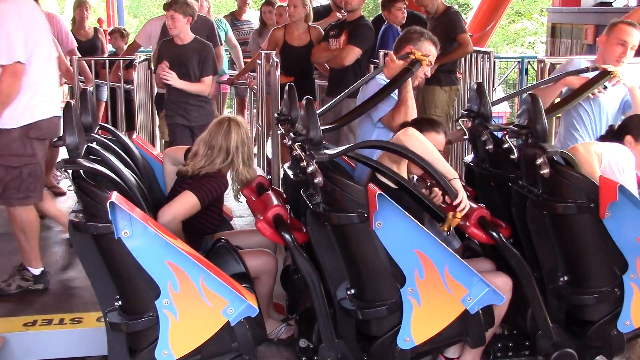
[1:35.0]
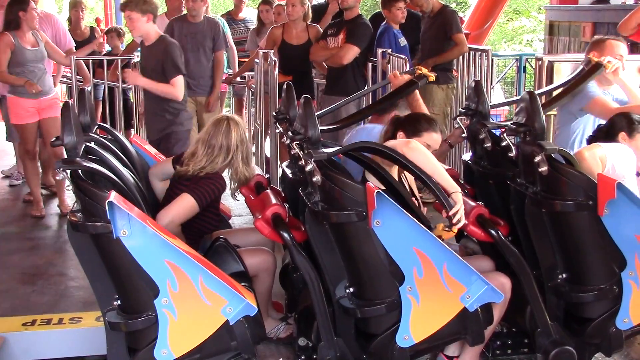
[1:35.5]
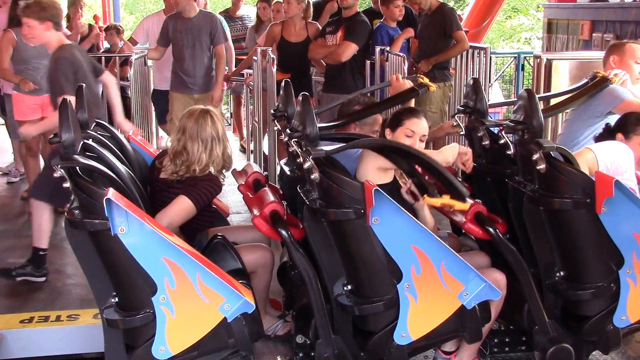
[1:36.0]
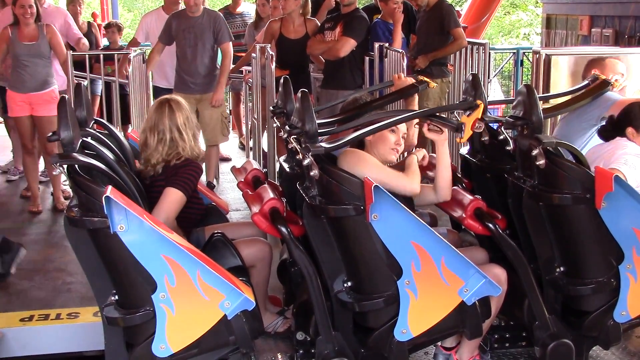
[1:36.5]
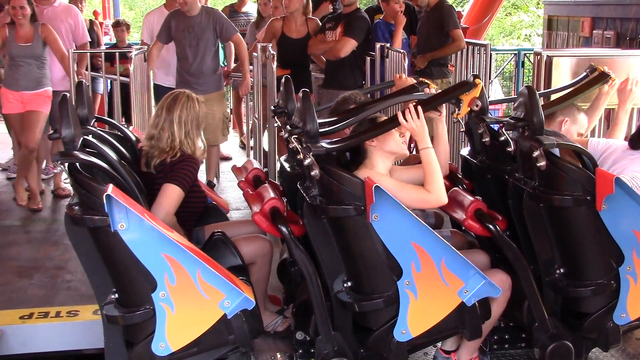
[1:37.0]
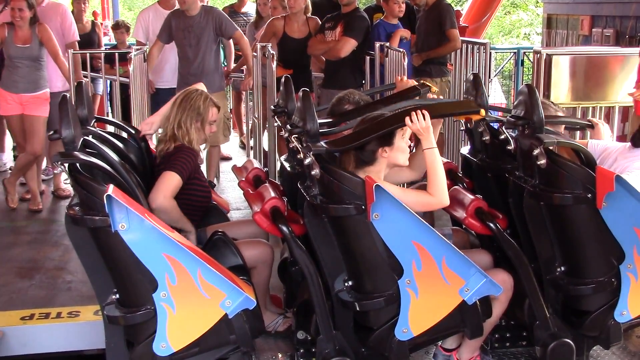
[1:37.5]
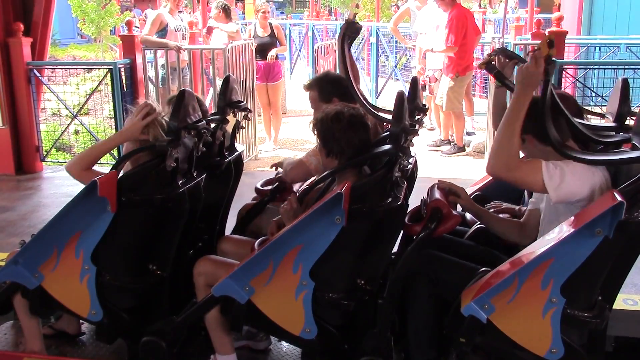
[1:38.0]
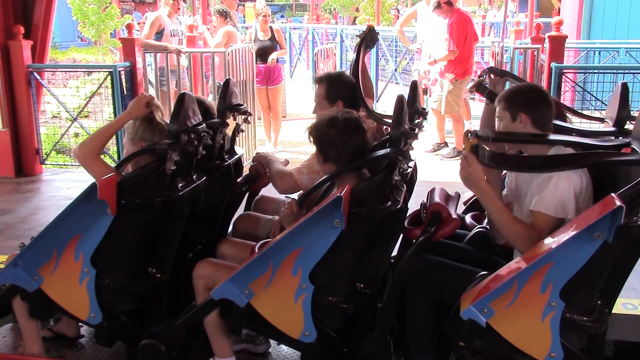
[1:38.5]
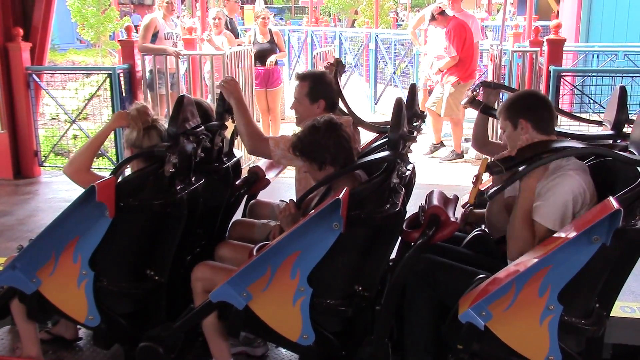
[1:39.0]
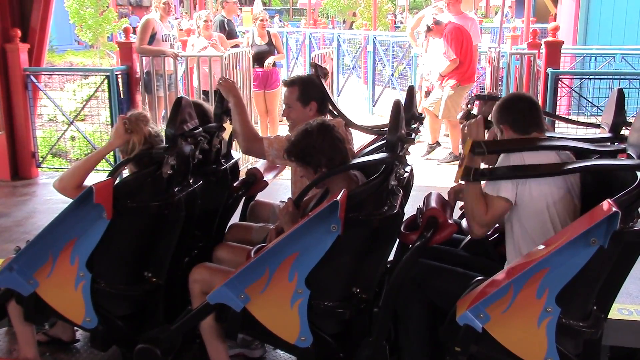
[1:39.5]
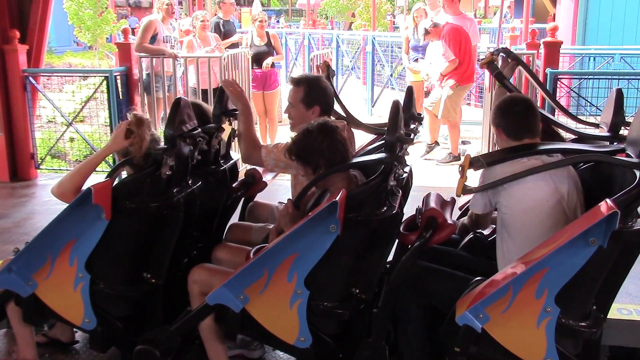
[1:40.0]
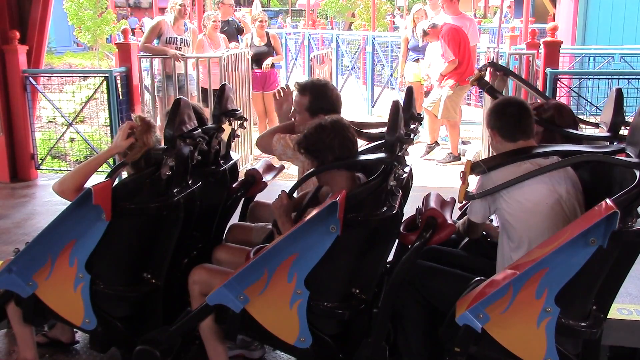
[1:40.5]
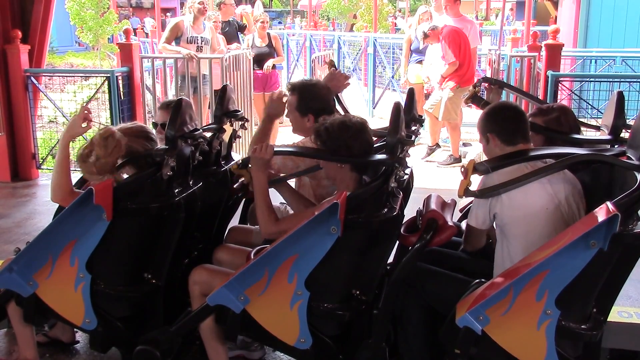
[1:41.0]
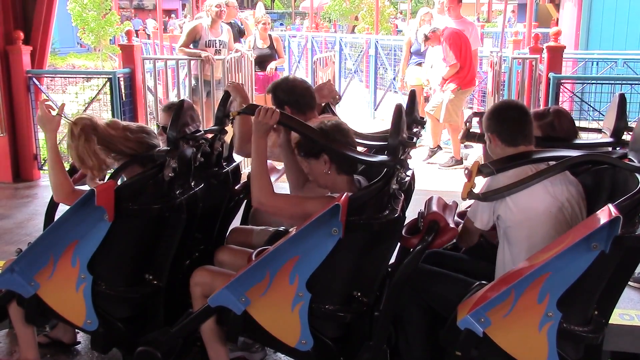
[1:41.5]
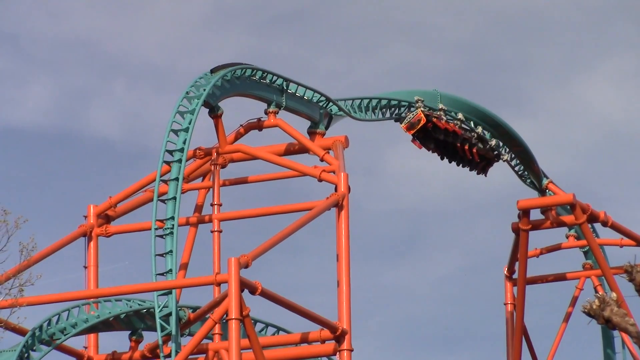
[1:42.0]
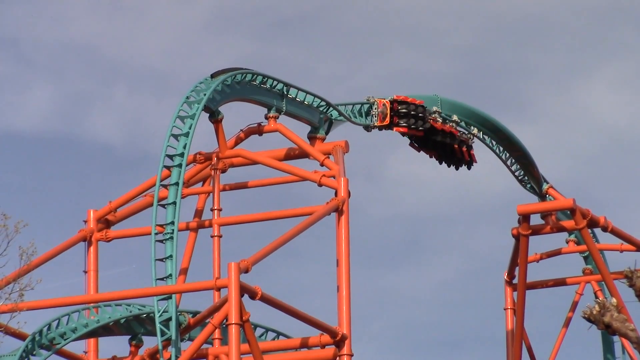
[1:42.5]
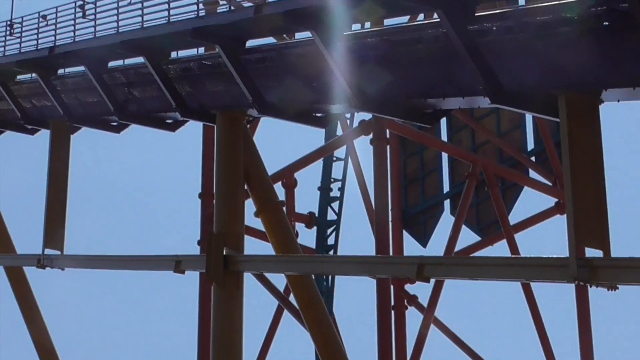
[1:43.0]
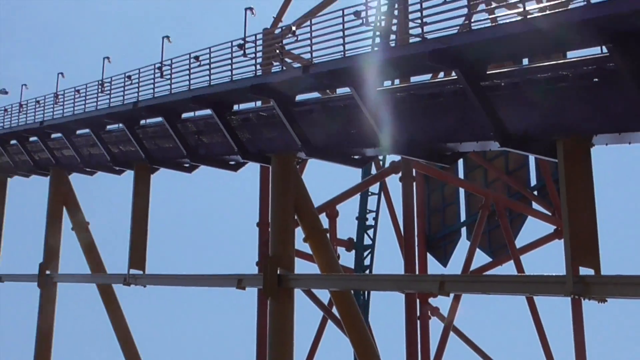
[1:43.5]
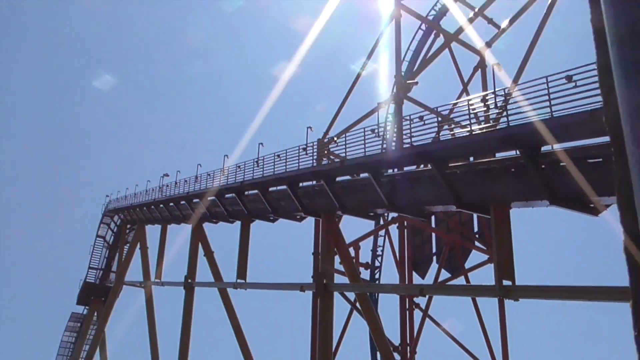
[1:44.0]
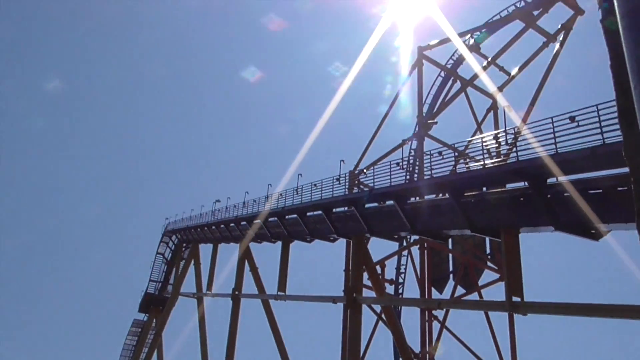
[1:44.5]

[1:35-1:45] About five or six people get into the roller coaster and start pulling down their harnesses, with a line of people in the back waiting their turn. The scene cuts to the opposite side view of the same people still buckling in. The coaster then moves through a section that twists around almost like a swirl; the tracks are light green, supported by either orange or red piping. The camera pans to what looks like another section of the coaster high up in the air, almost like a trackway, with guardrails on both sides and hooked extensions at periodic intervals on the guardrail, possibly light fixtures. On the left, a track goes up to this railway area; everything is supported by orange piping, and banner flags are on the far side of the railway.